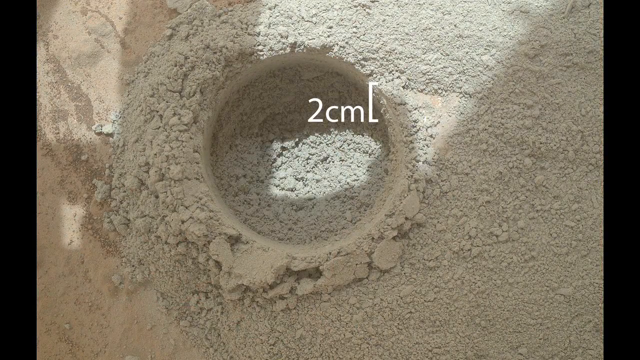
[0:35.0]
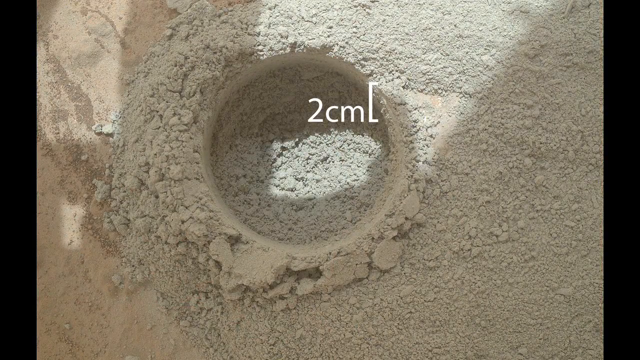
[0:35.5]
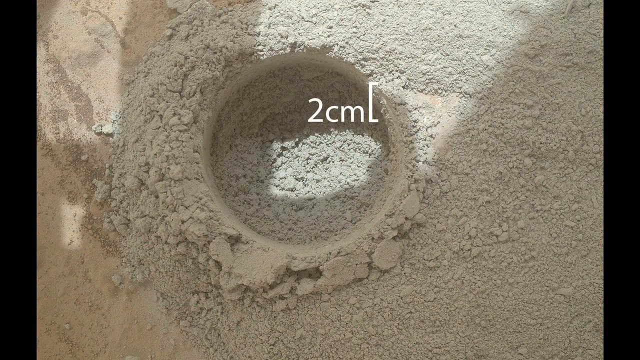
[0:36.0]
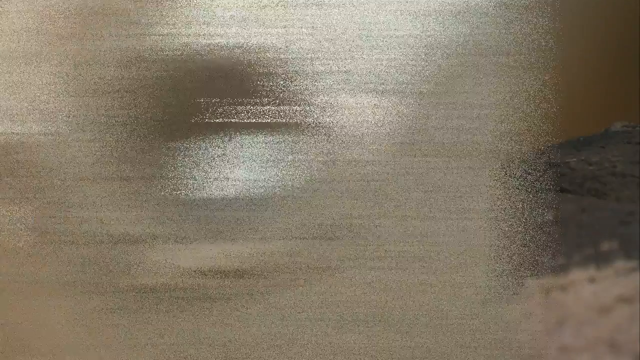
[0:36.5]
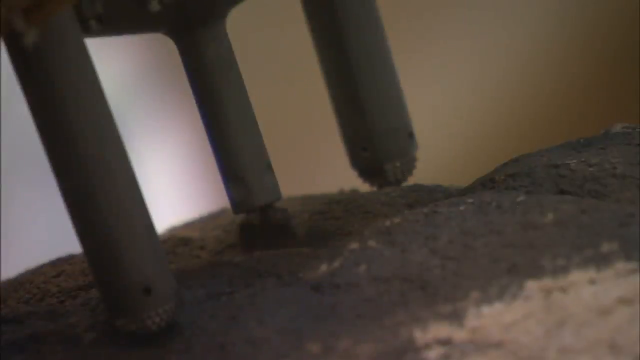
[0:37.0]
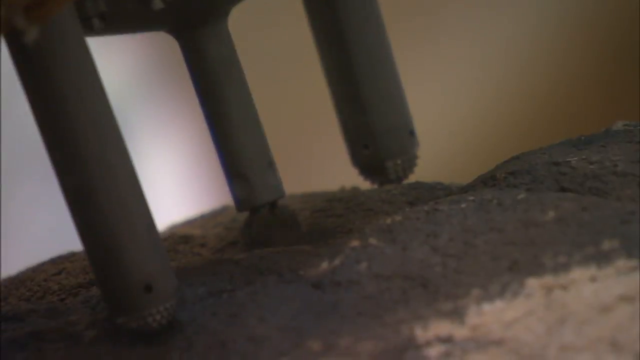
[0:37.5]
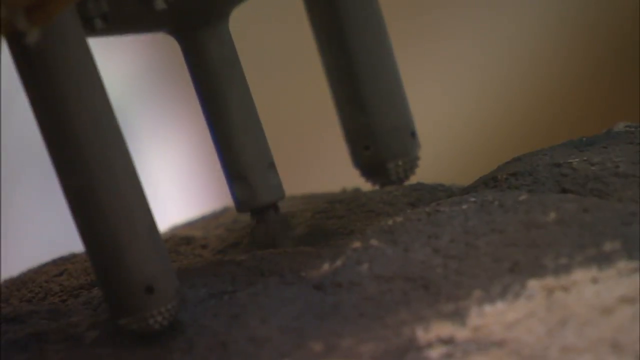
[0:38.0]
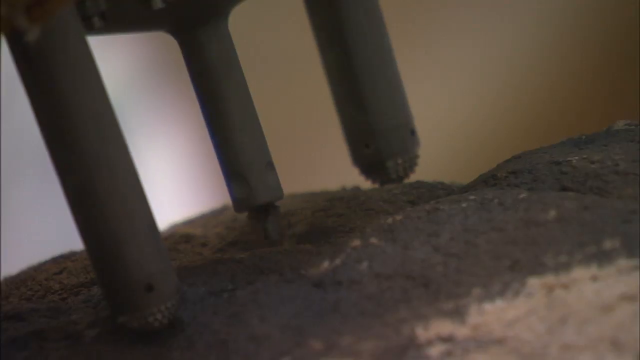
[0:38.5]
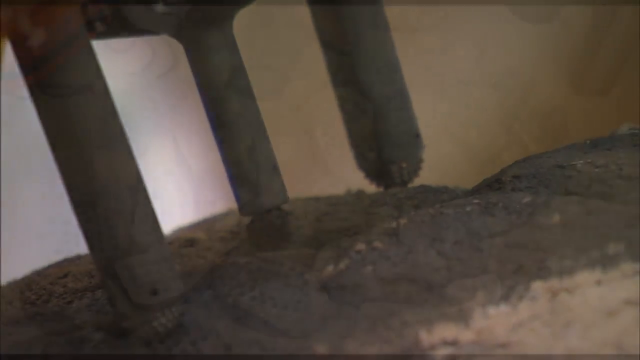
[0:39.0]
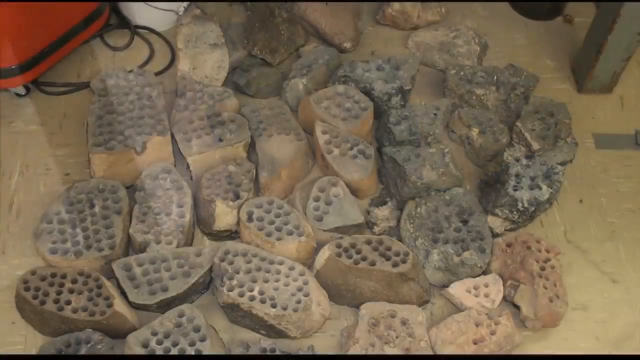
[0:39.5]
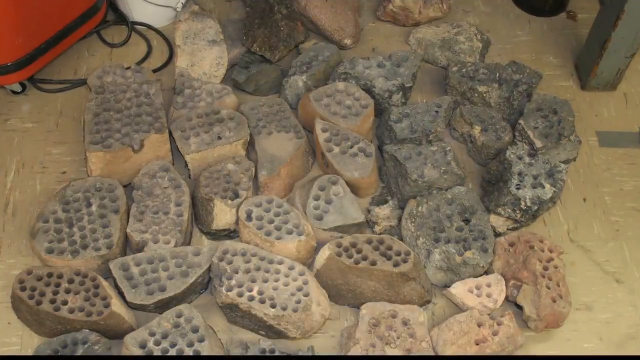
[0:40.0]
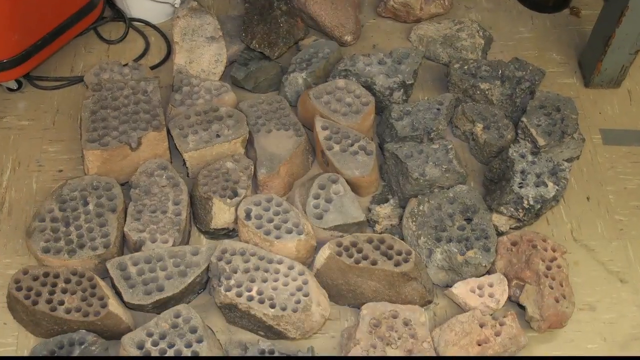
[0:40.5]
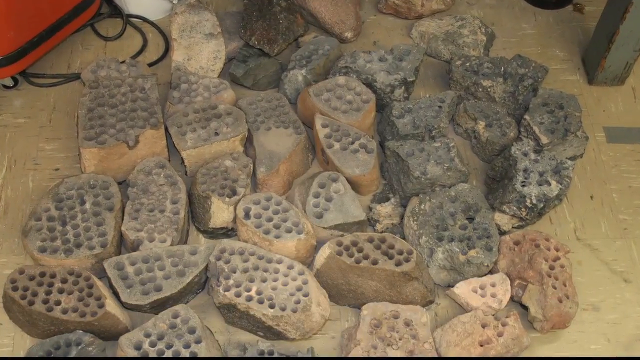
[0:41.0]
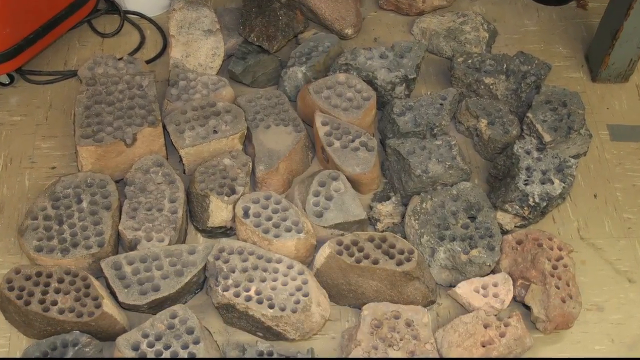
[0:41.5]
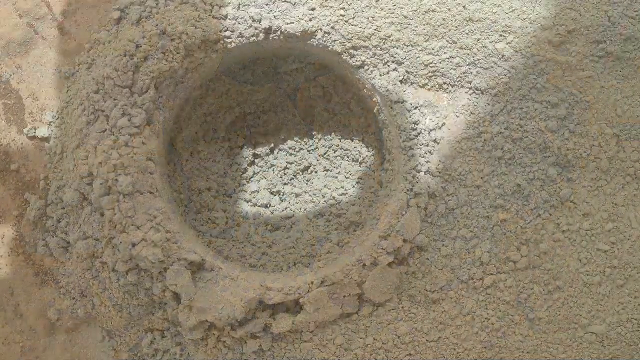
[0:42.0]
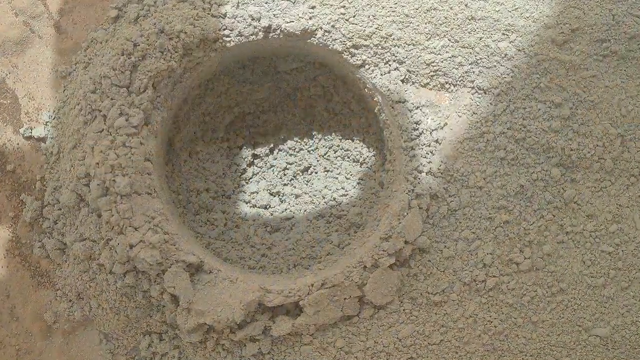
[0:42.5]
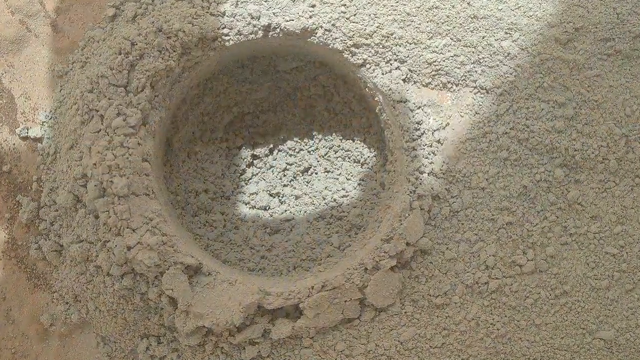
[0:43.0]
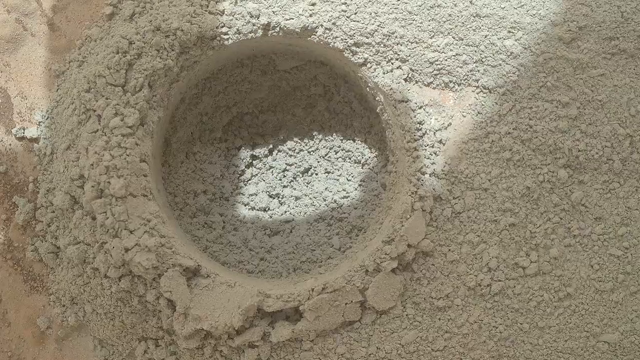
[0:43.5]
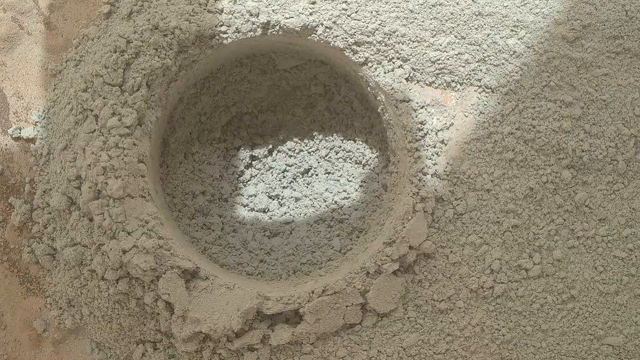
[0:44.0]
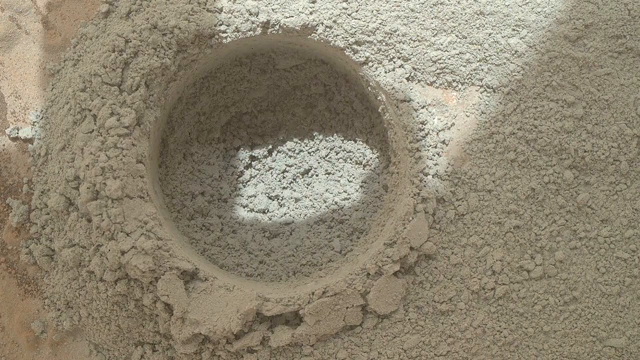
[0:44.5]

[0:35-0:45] Samples taken from the surface are collected in one pile on a linoleum floor. Each has a series of holes drilled into it; the specimens are shaped very differently from one another and have different numbers of holes. An up-close view shows the drilling process: a set of prongs holds the rock down while the one in the center drills it out, possibly for testing what materials the samples contain.